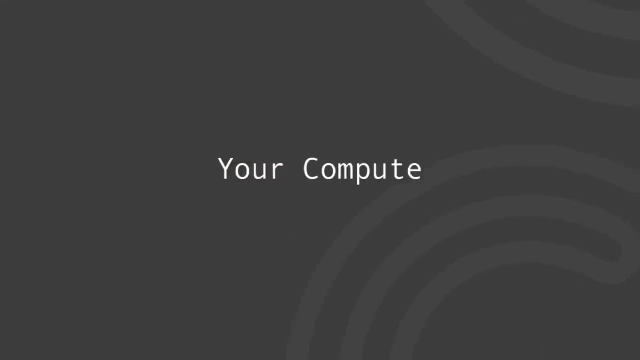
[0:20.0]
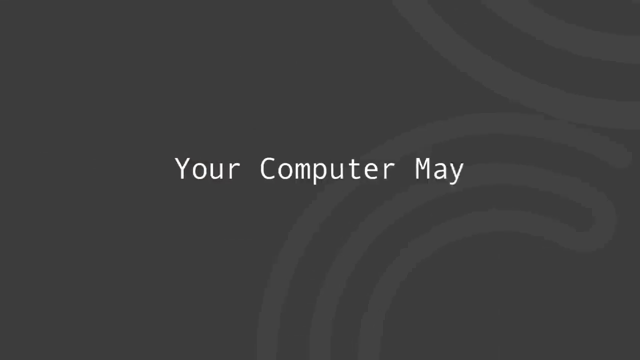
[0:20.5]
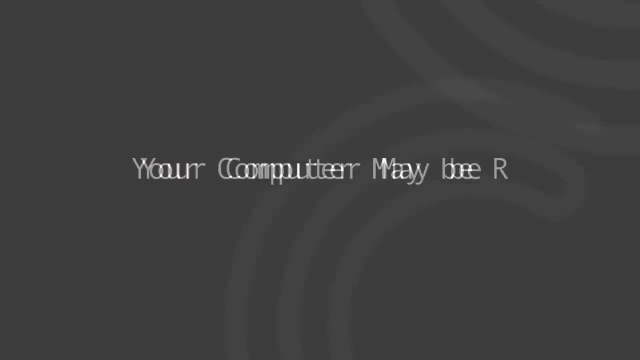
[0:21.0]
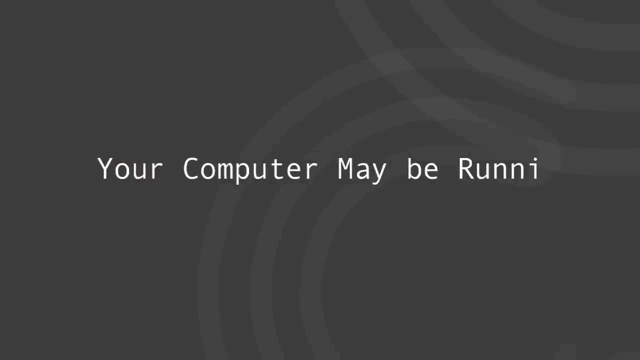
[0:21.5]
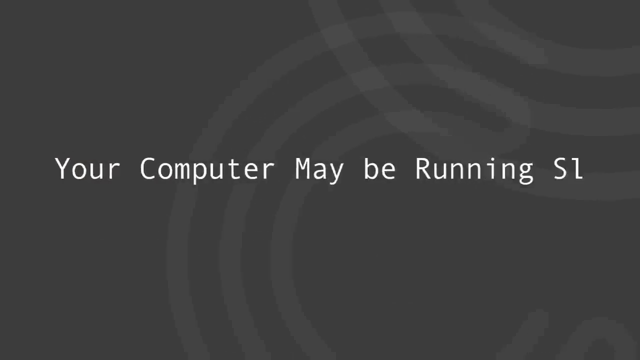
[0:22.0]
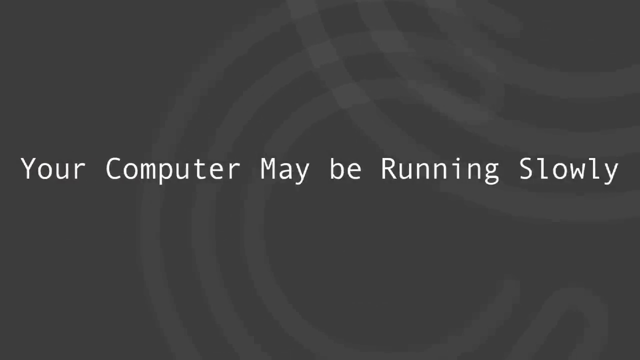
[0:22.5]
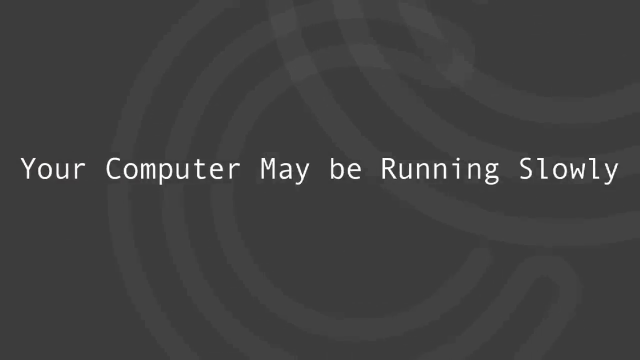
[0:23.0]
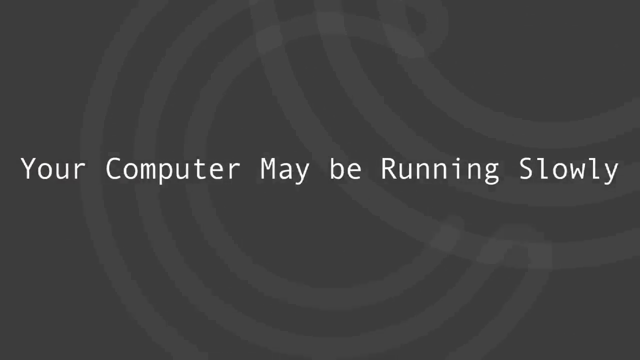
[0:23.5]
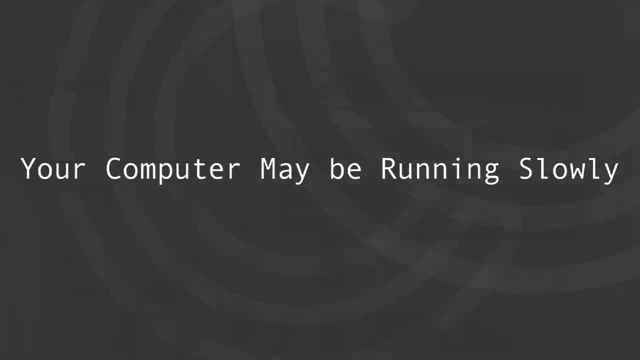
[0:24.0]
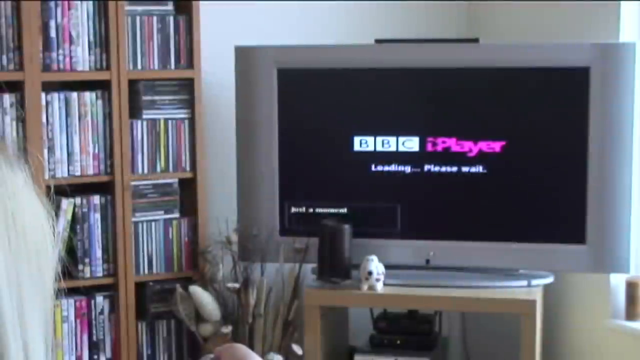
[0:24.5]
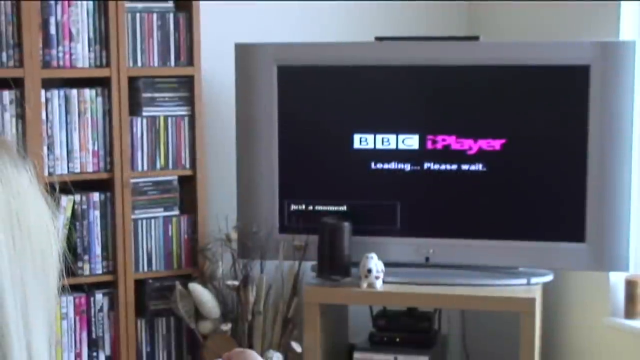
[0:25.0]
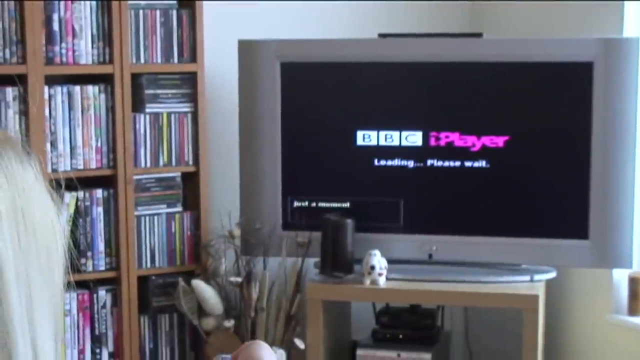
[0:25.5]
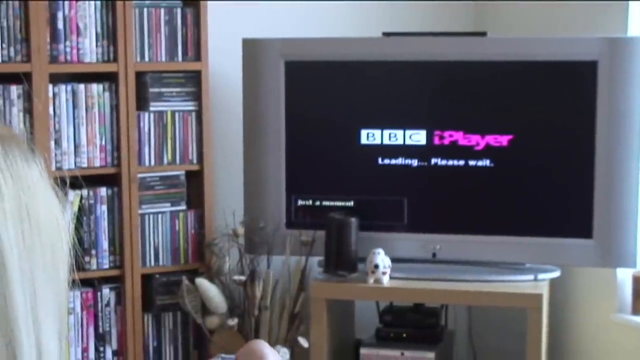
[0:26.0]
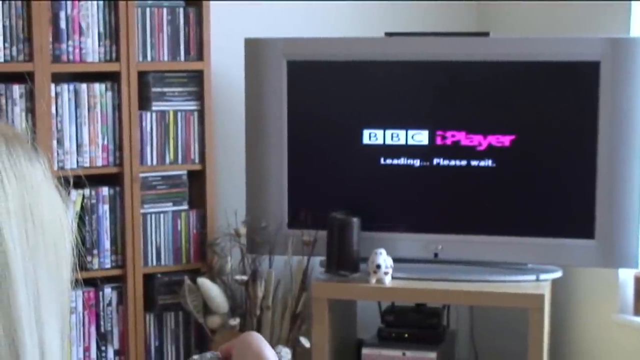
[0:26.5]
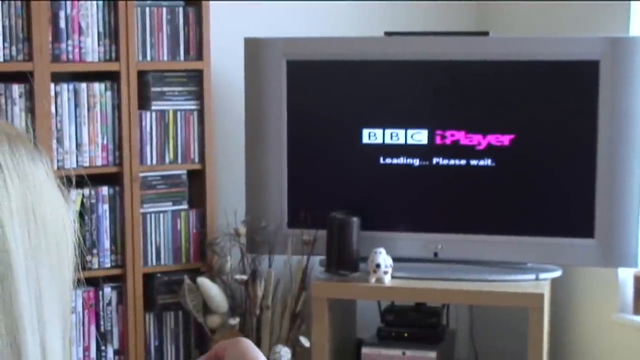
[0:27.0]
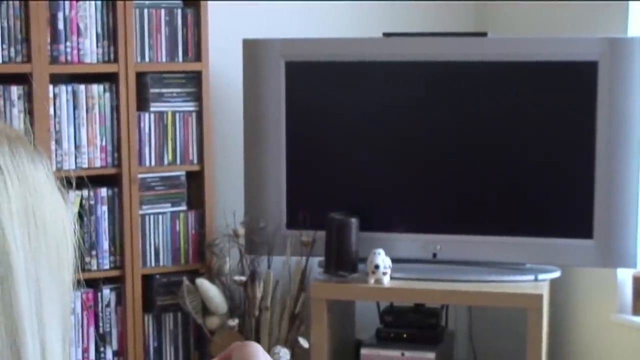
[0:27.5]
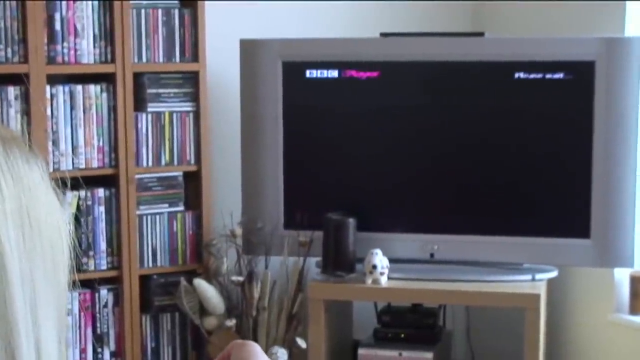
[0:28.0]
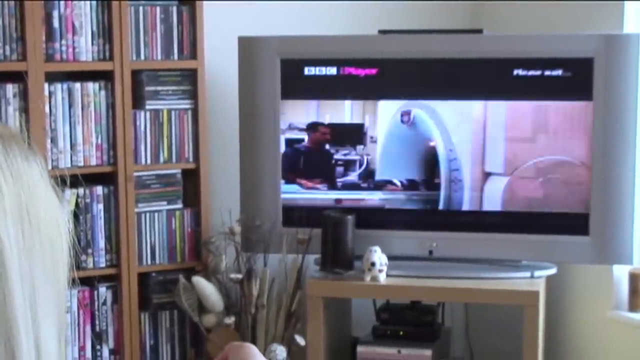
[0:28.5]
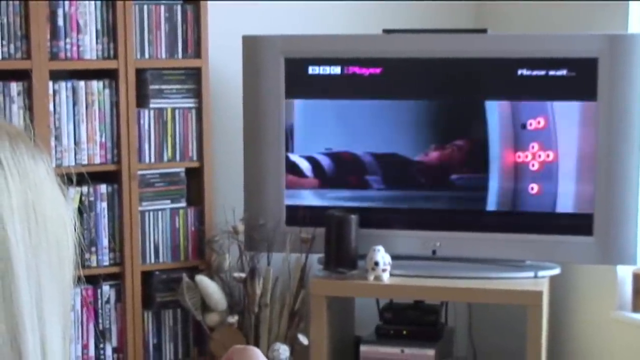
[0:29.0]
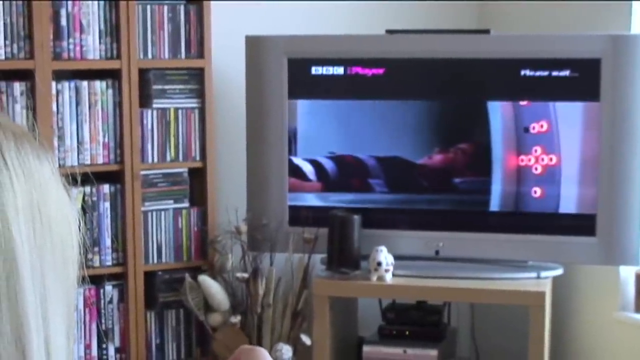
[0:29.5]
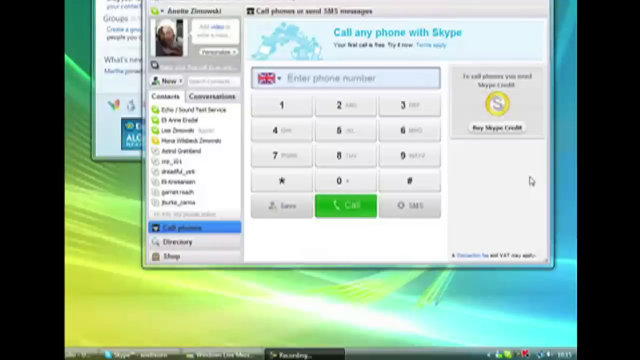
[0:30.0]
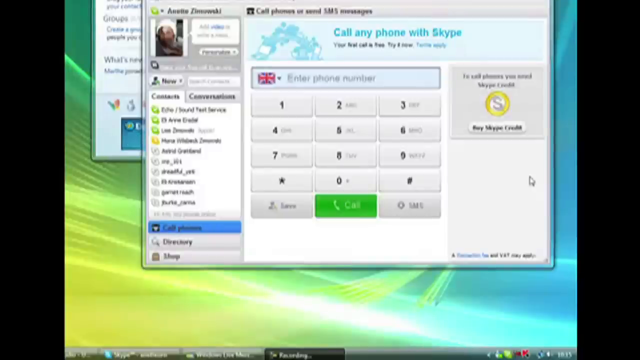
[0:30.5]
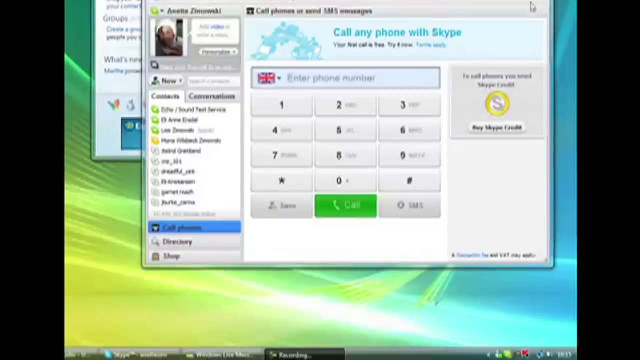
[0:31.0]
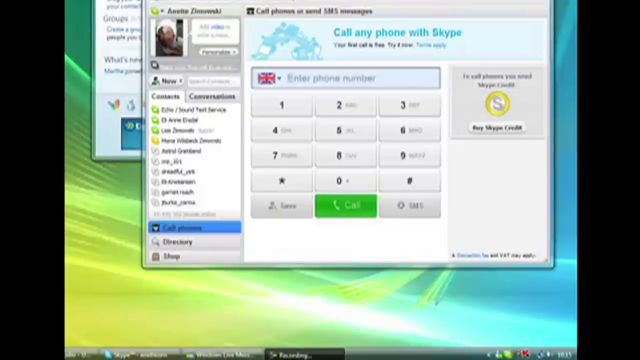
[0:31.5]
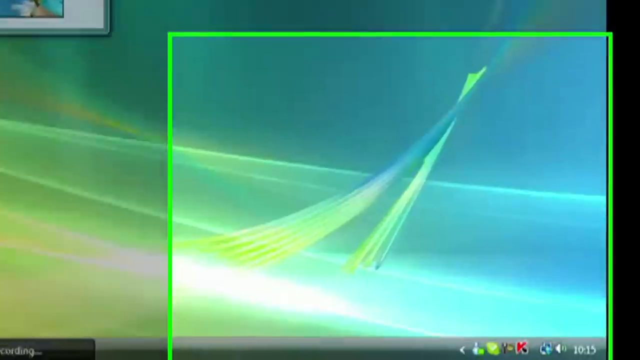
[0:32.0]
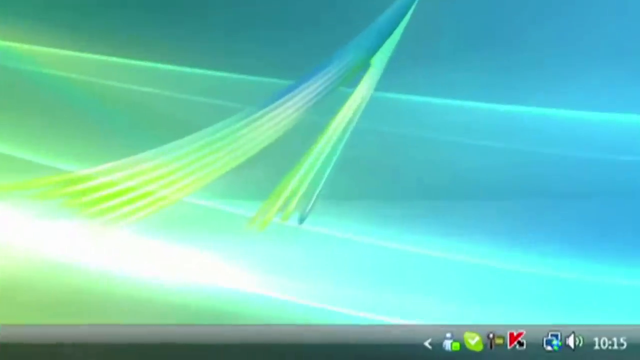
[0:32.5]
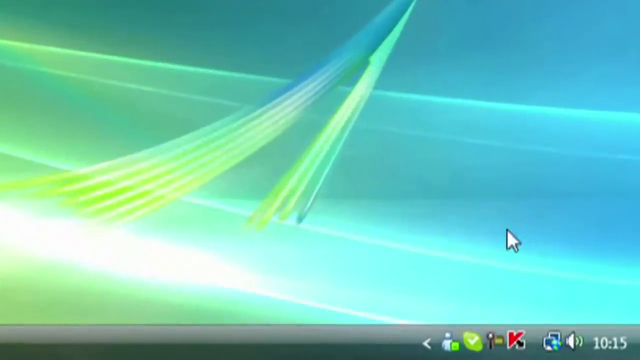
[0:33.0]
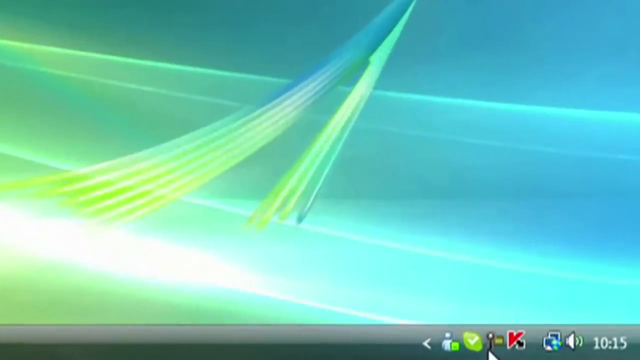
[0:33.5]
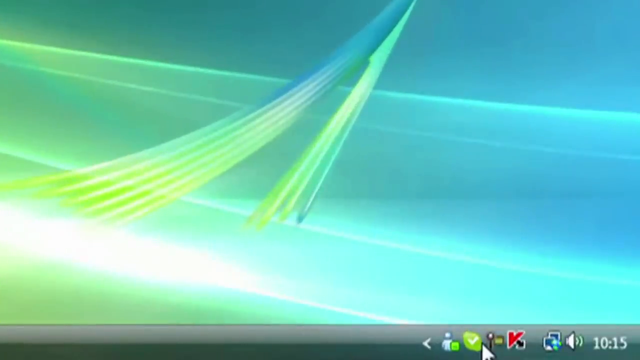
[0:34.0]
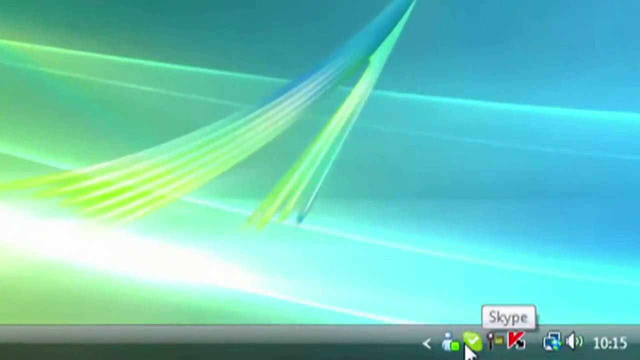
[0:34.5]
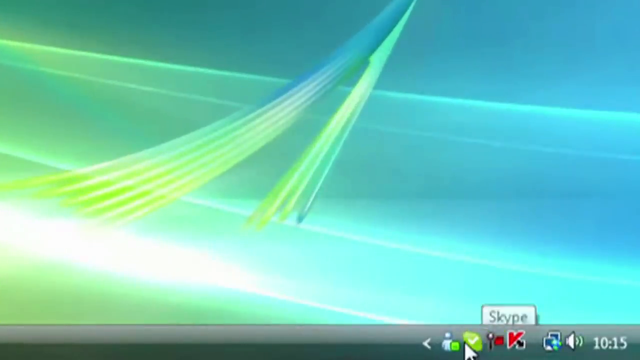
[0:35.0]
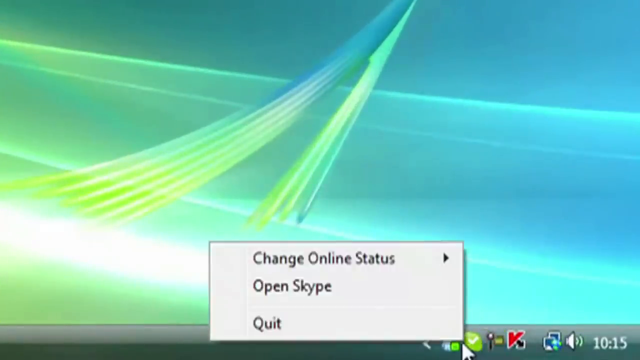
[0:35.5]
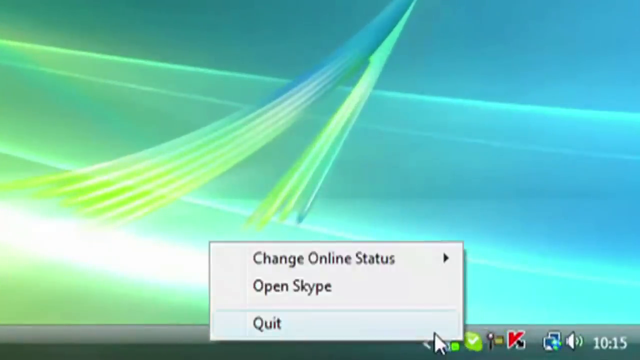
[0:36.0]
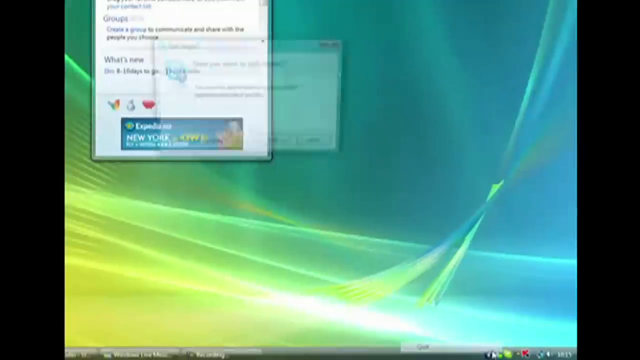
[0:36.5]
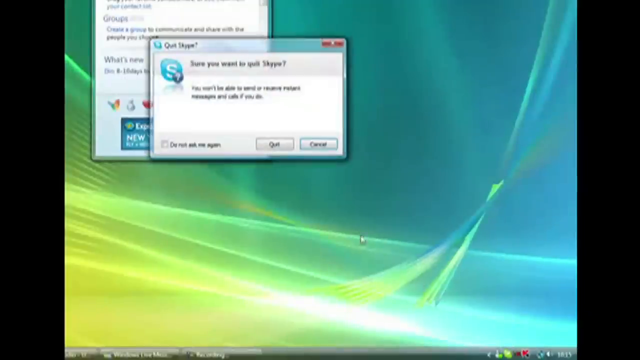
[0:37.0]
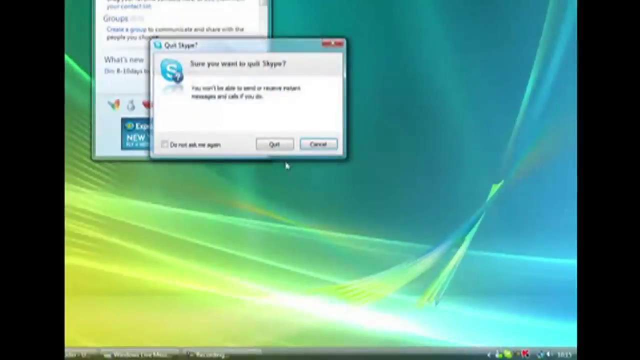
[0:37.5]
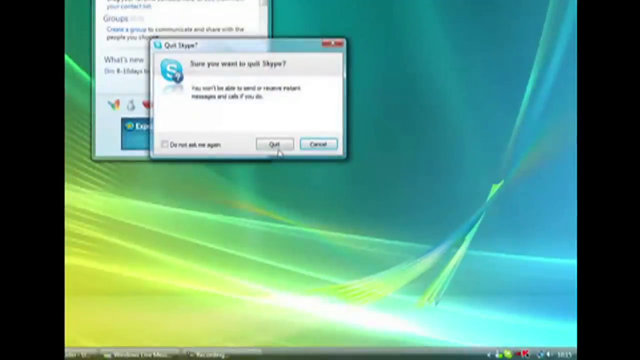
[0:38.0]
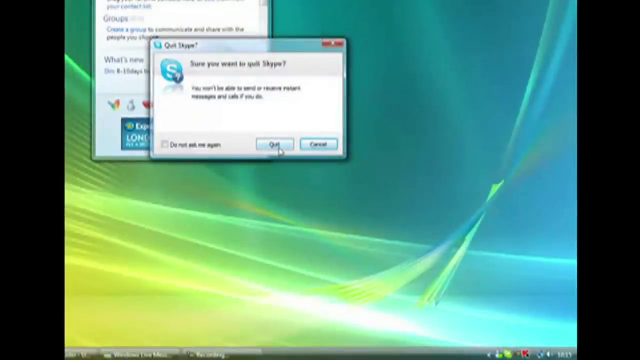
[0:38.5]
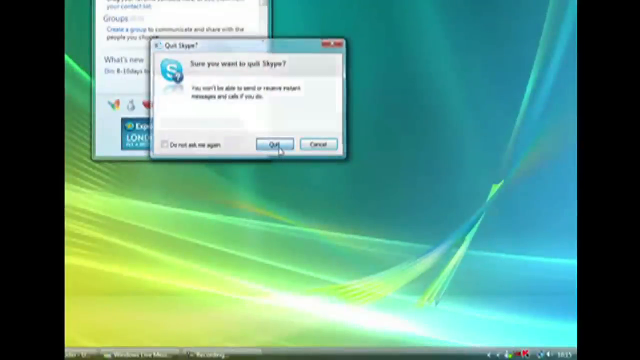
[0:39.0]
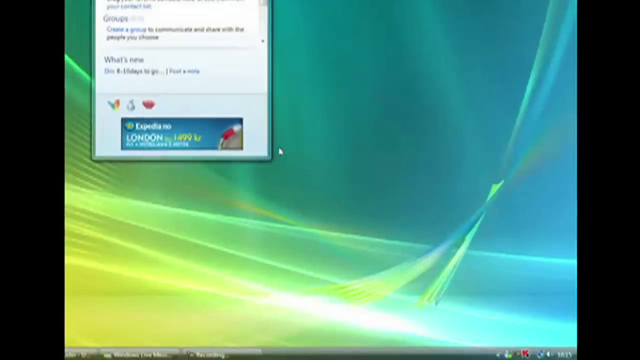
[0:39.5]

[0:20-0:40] Someone with white hair is behind the television, sitting in a study room with a television on a television set. Writing on the television reads "BBC player loading please wait". The next scene shows someone having an MRI scan, with their whole body laid in the machine. The video pauses, and a man tries to make a call on the computer through Skype to somebody in the UK; the call apparently does not work. A screen of numbers appears, and he tries to close that tab on the screen, then tries closing it again.